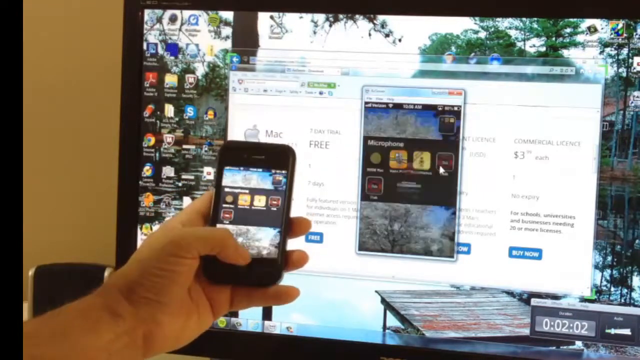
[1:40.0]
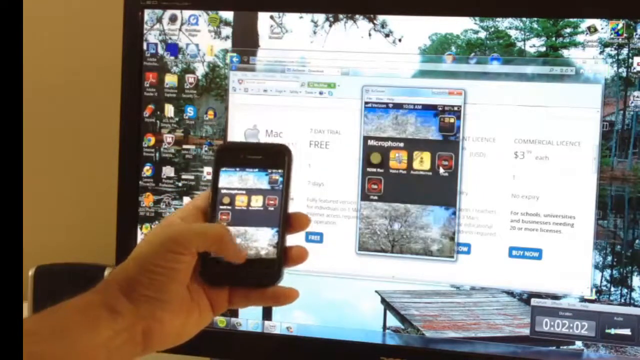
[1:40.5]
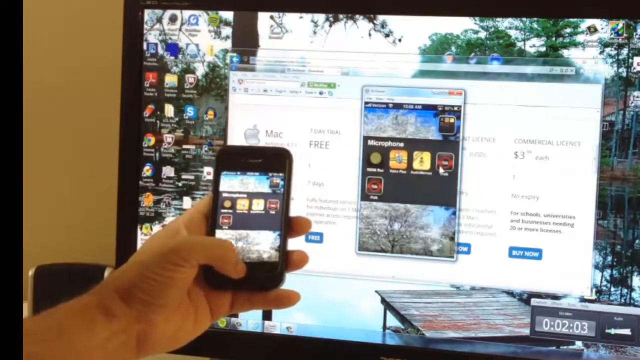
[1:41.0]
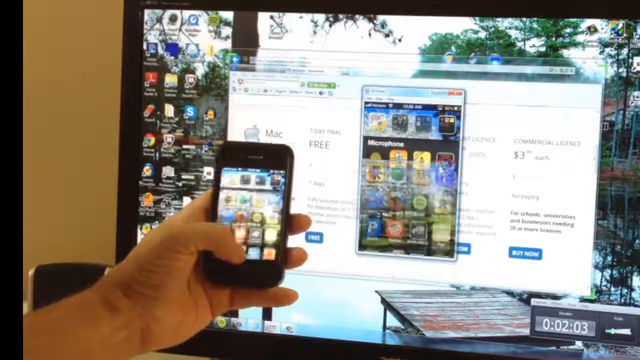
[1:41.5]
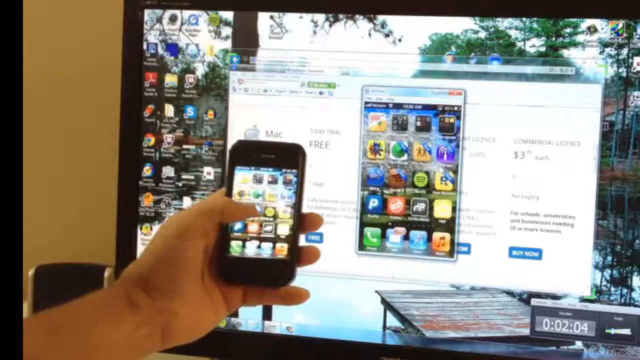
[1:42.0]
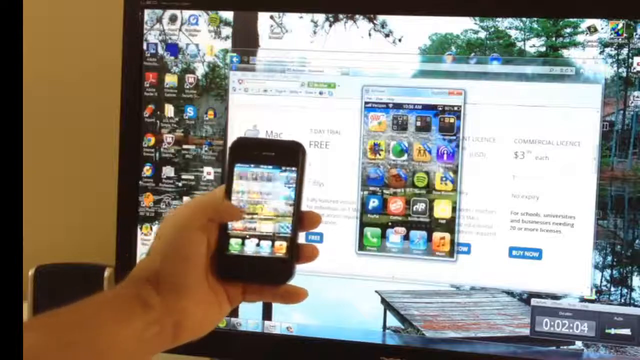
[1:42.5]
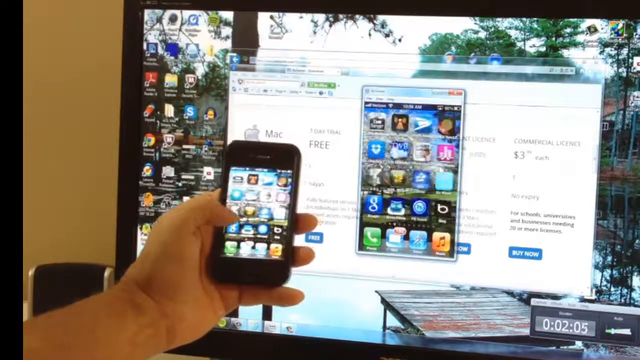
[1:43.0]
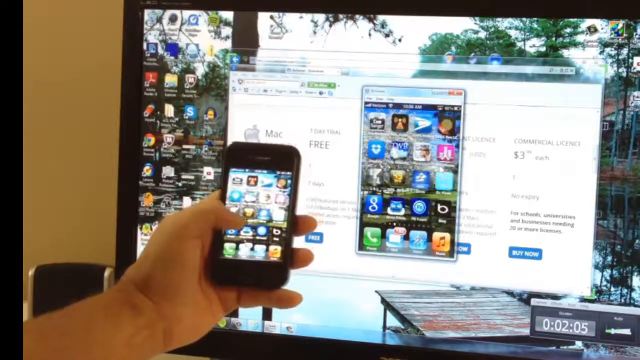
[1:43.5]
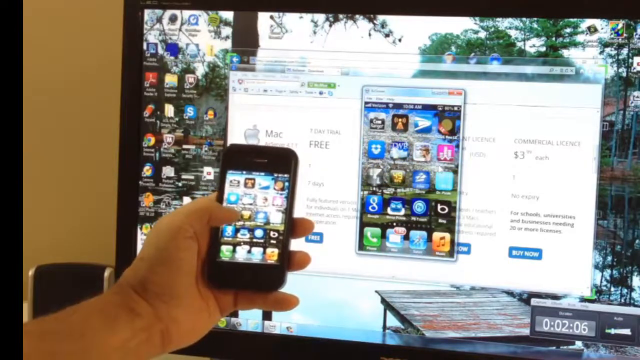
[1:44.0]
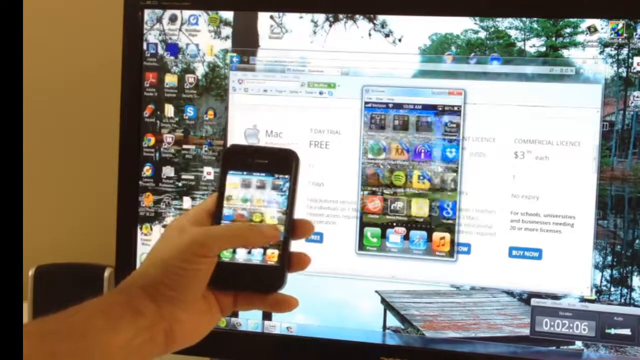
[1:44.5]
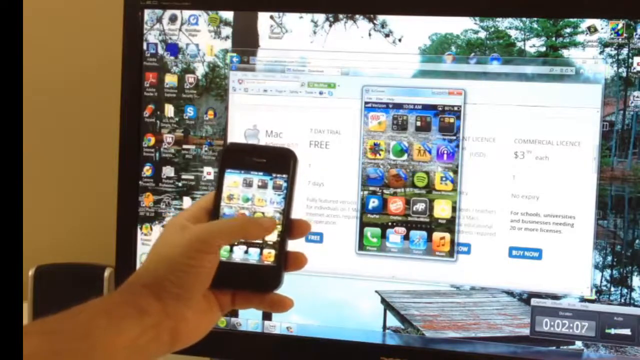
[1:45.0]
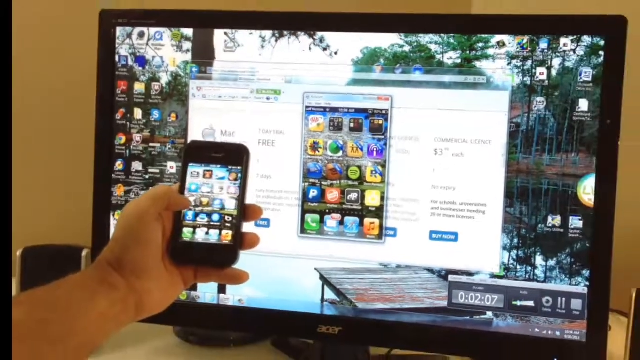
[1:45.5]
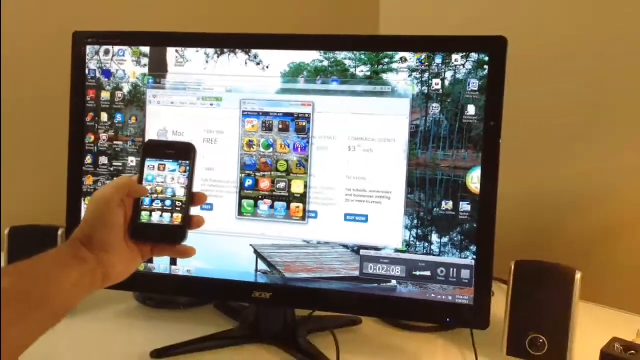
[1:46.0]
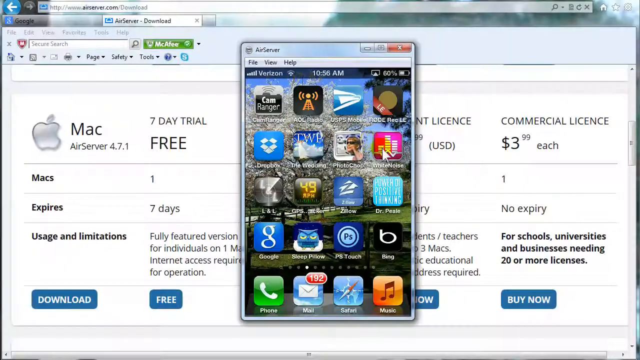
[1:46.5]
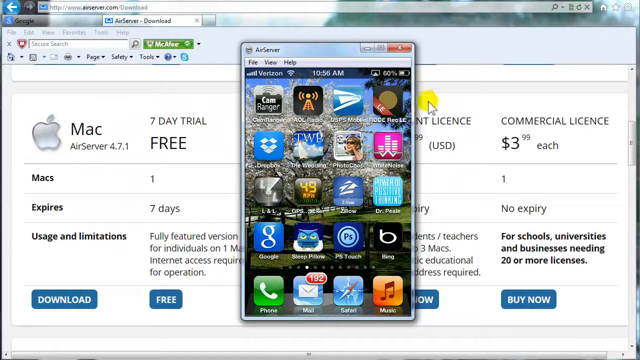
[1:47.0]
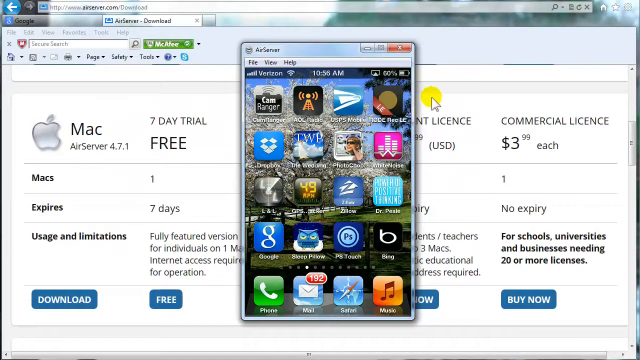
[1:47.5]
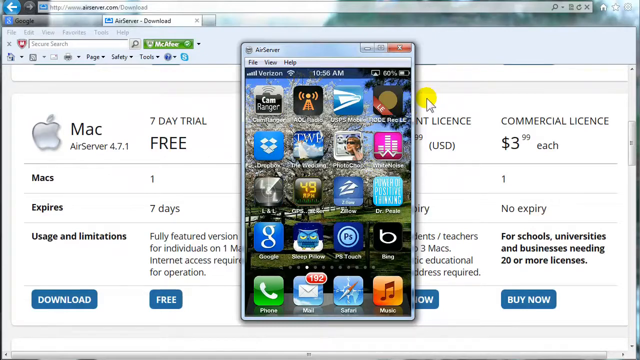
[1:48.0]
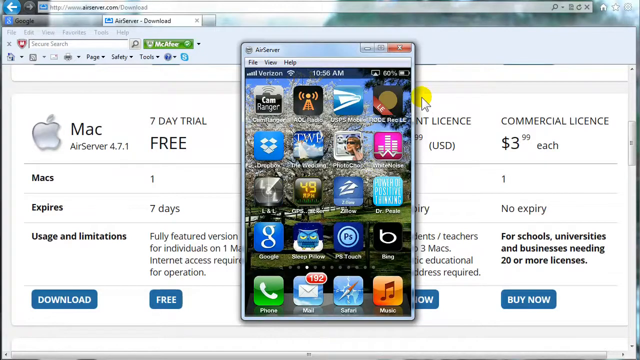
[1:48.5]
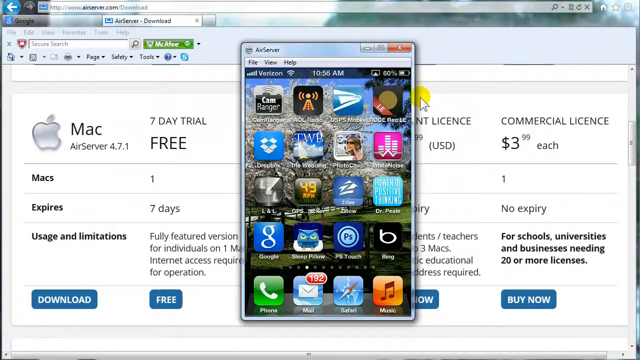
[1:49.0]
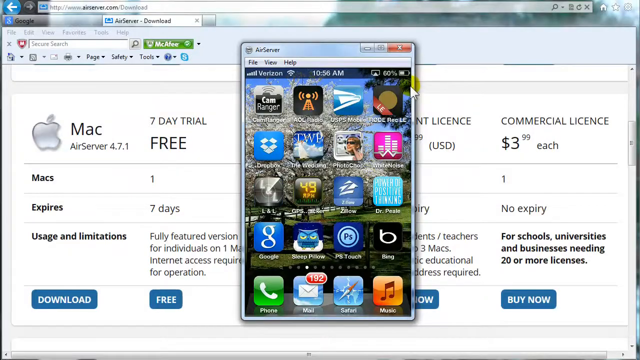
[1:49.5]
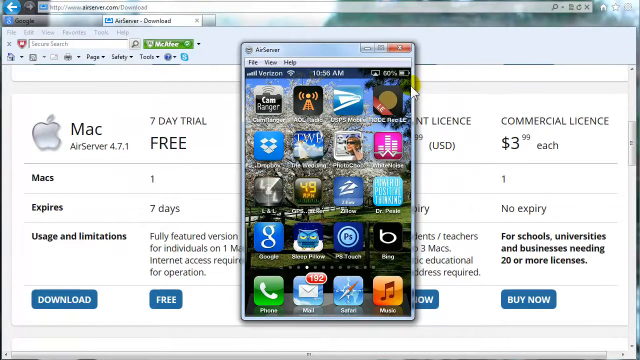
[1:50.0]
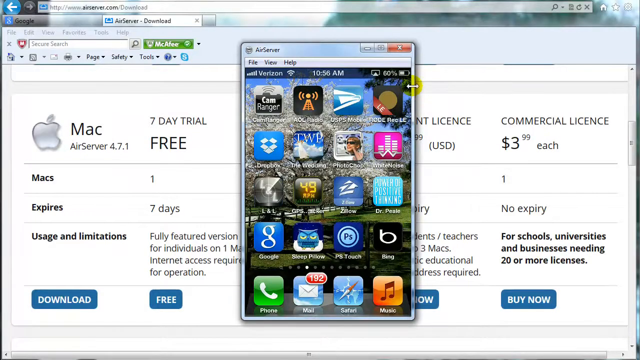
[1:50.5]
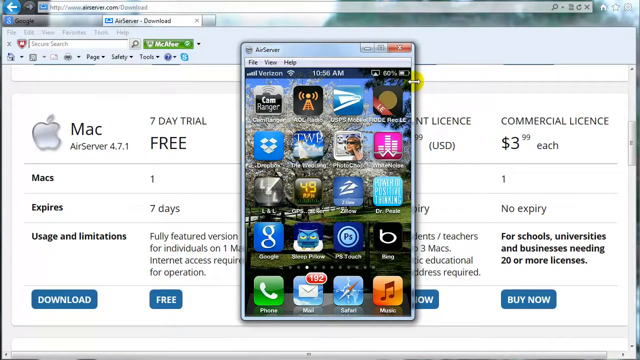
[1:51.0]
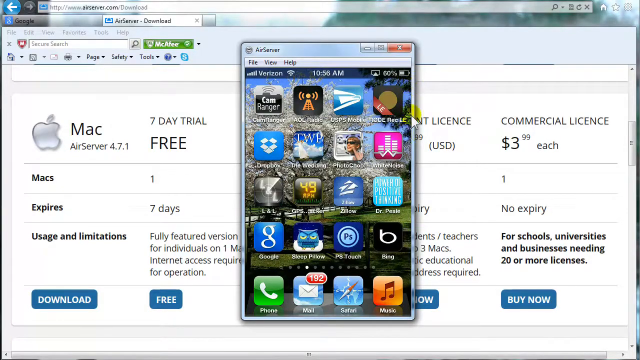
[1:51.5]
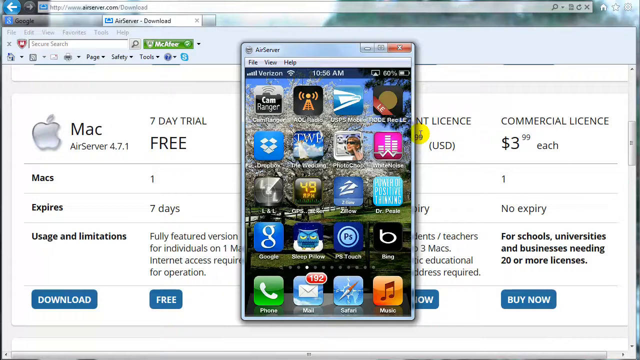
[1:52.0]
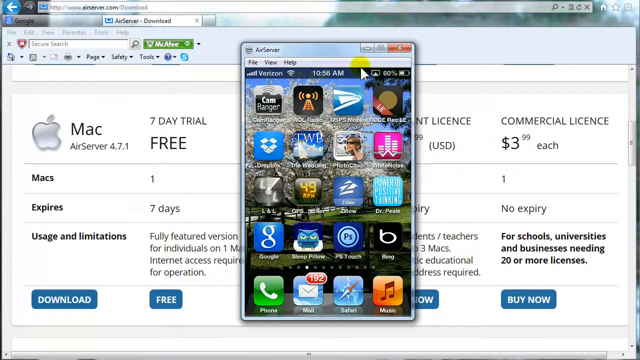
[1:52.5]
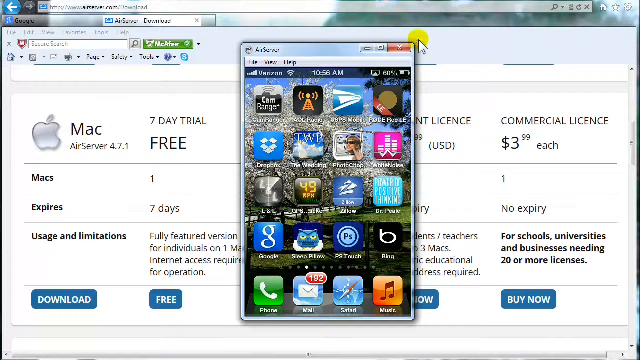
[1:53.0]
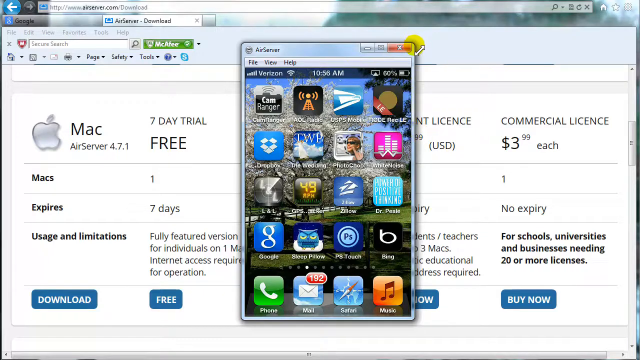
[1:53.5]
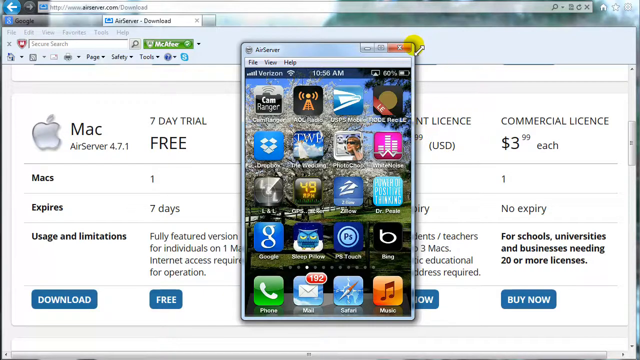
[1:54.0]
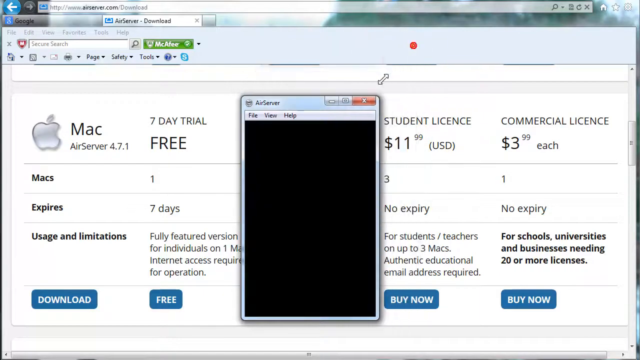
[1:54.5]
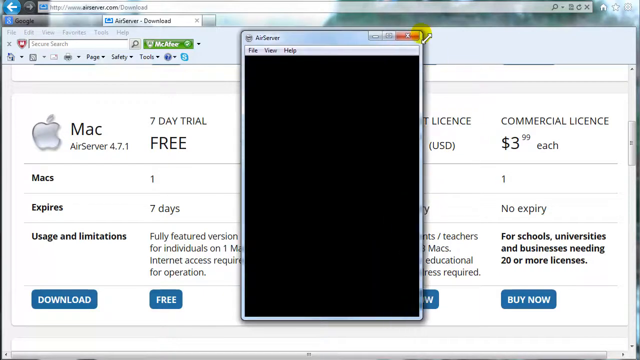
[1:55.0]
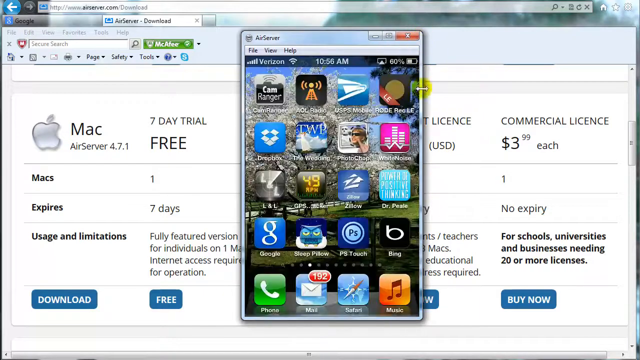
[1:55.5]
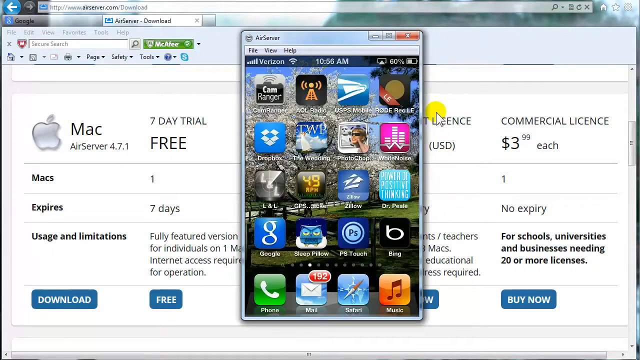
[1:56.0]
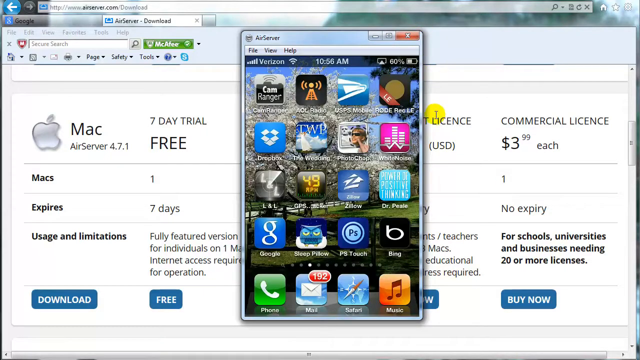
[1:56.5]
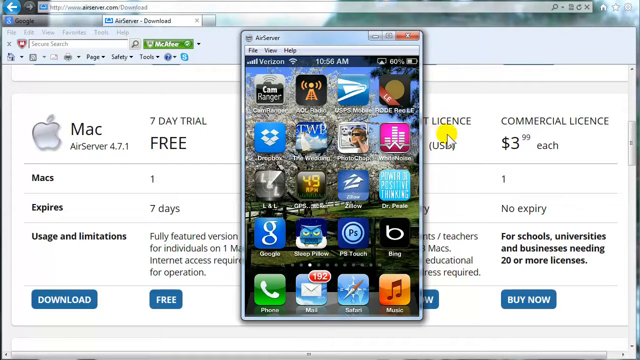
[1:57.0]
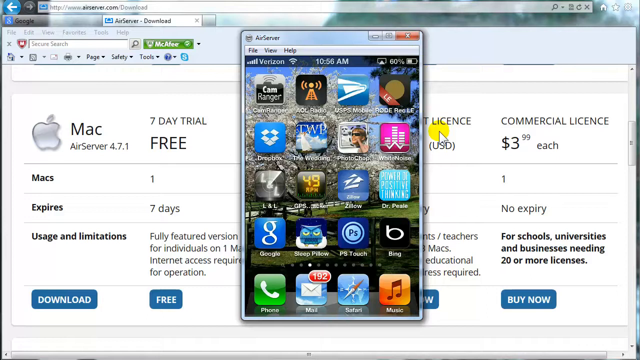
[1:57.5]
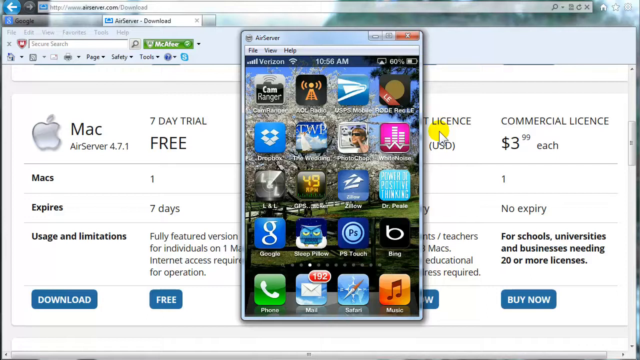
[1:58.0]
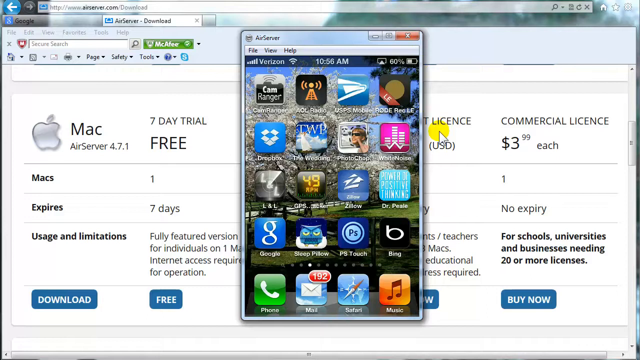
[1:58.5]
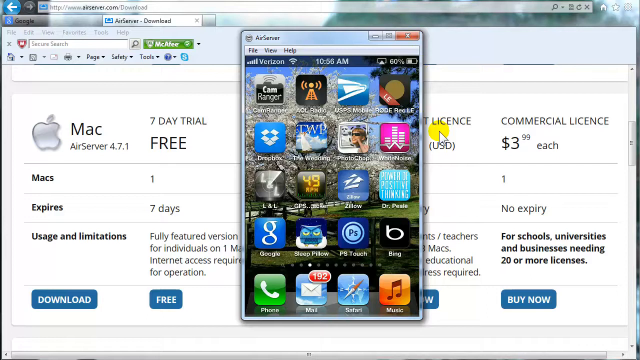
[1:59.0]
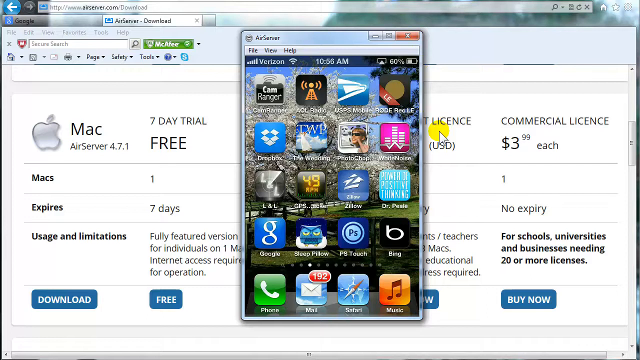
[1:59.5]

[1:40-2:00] A person holds a cell phone in the left hand; the screen is on, and they seem to be using their thumb to scroll around. Behind them a monitor is on, with a window open that looks like the shape of a cell phone and shows the exact same screen as the phone. He seems to be operating the computer screen with his cell phone: as he scrolls to the left, the computer screen seems to mirror the phone, and then it goes to the right, apparently demonstrating how the software works. A cursor points to one of the icons, and he seems to grab the edge of the window, minimizes it, and then enlarges it again.